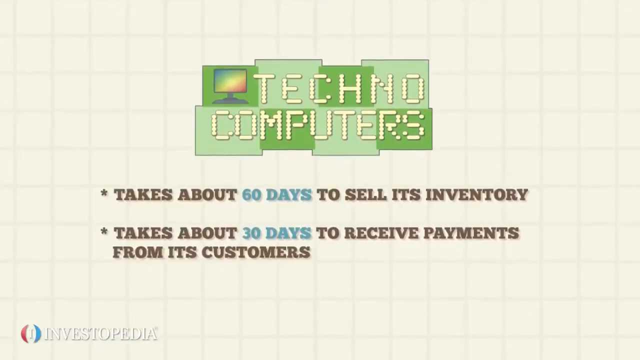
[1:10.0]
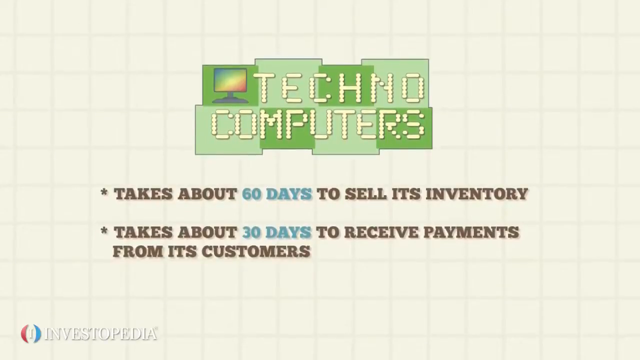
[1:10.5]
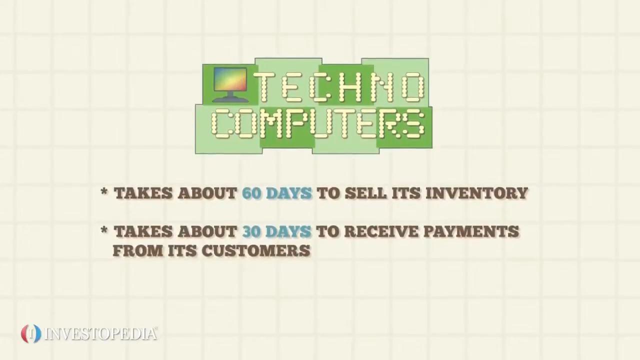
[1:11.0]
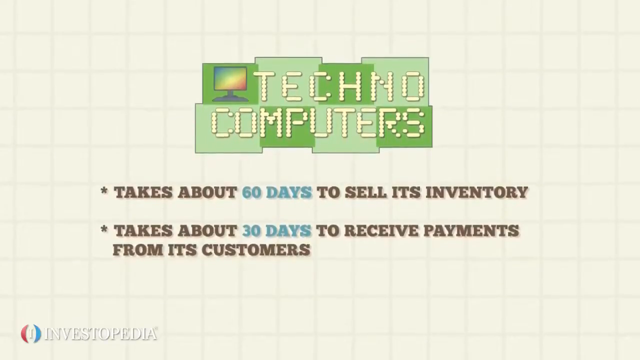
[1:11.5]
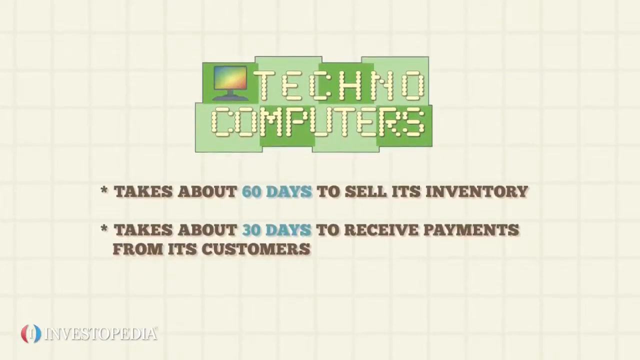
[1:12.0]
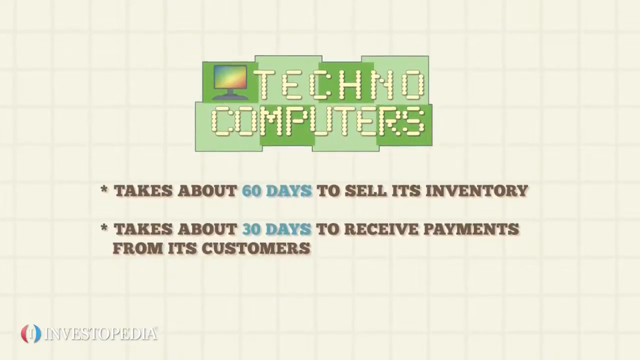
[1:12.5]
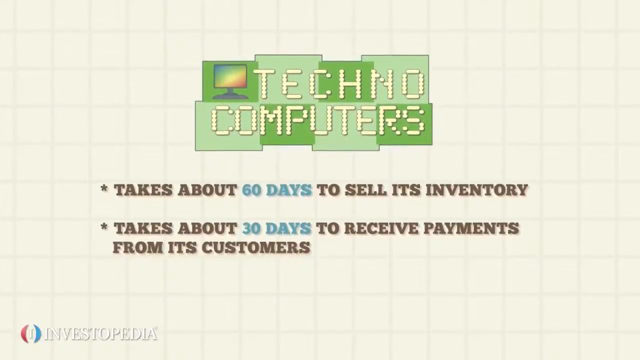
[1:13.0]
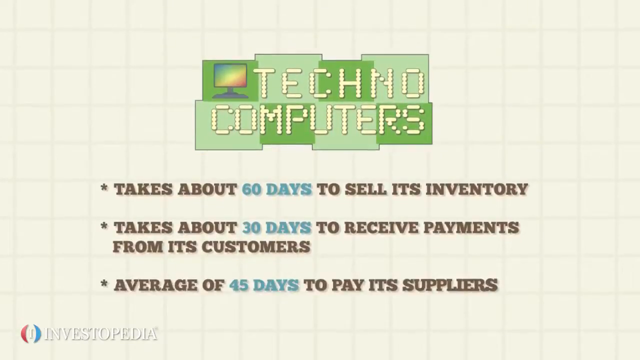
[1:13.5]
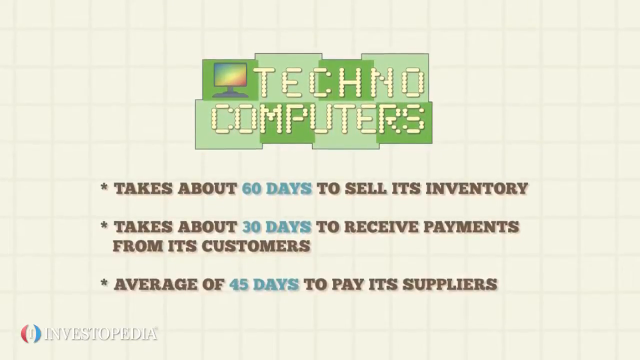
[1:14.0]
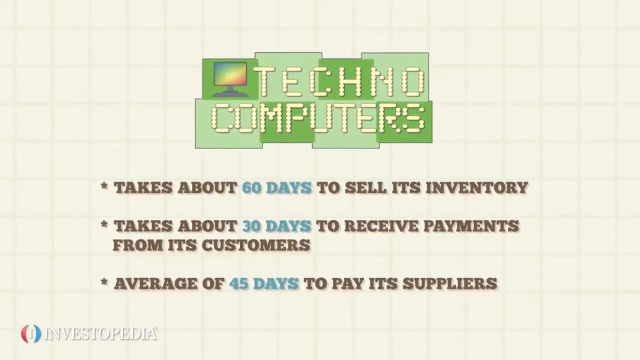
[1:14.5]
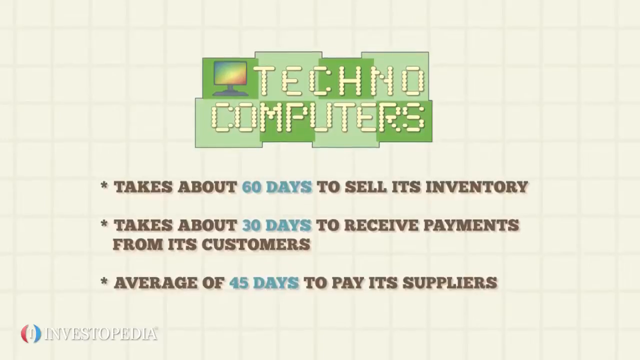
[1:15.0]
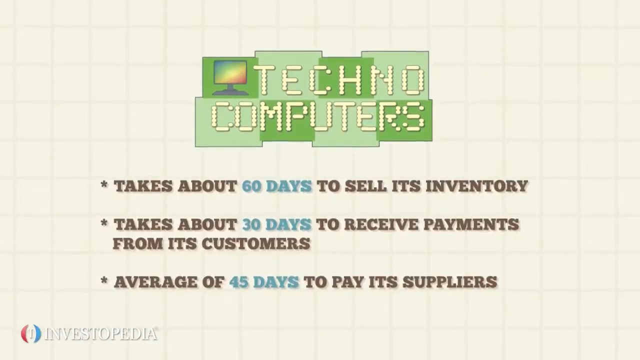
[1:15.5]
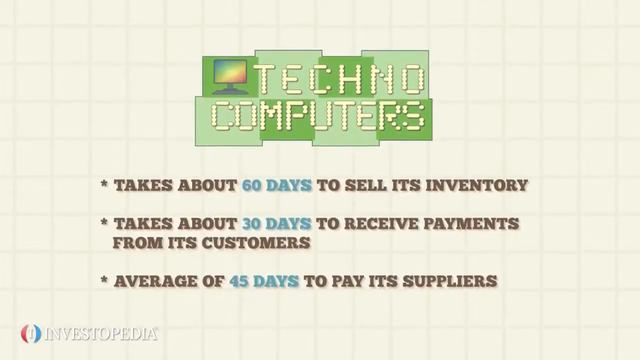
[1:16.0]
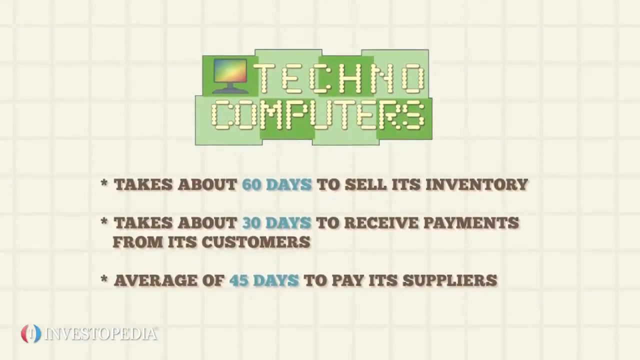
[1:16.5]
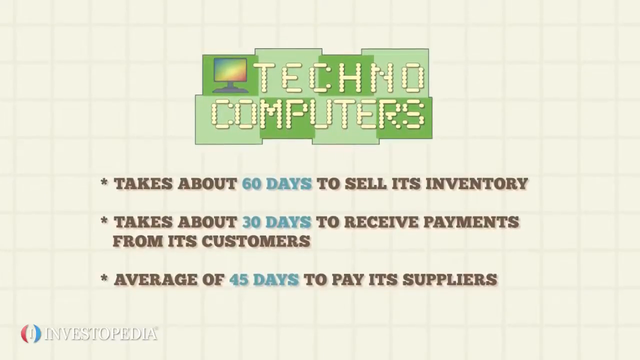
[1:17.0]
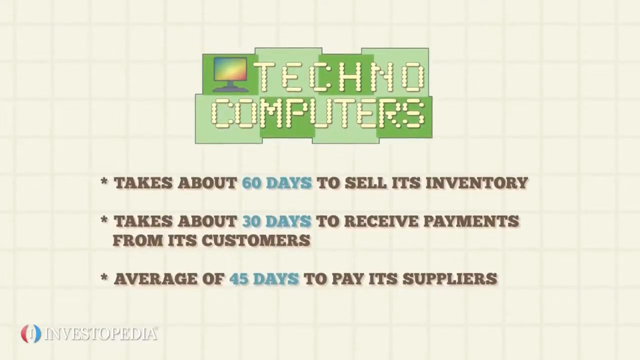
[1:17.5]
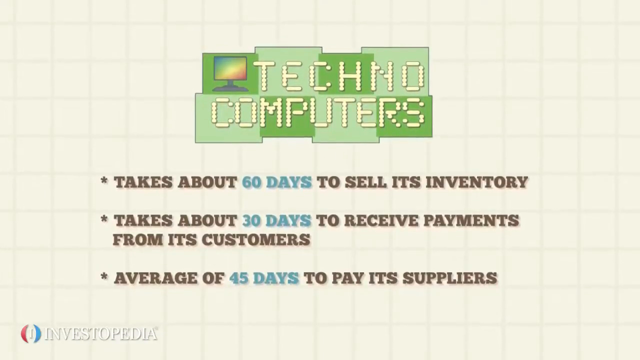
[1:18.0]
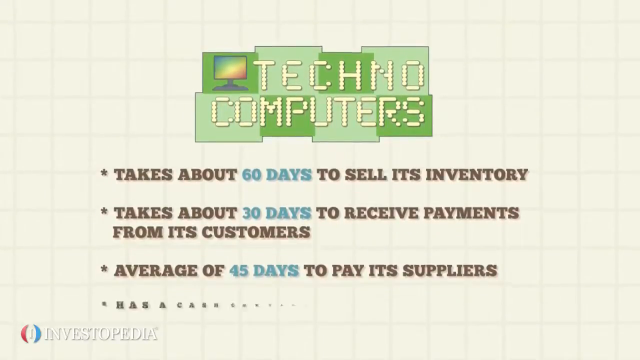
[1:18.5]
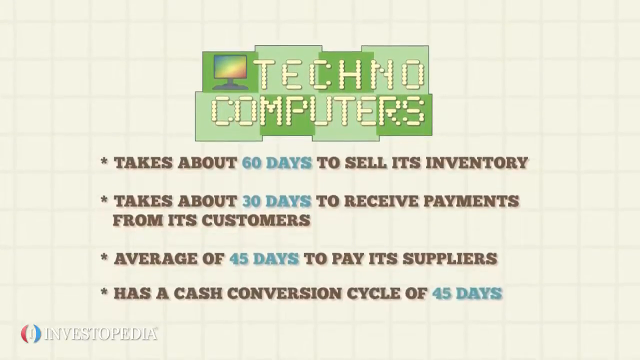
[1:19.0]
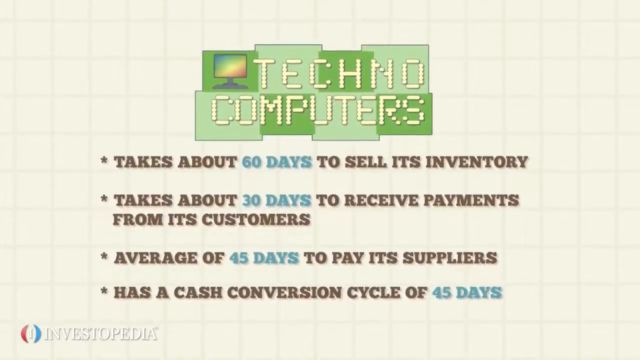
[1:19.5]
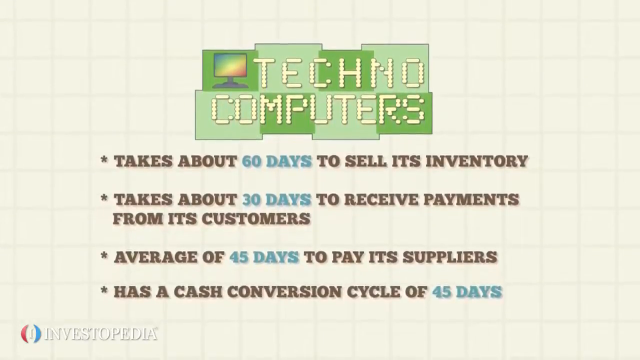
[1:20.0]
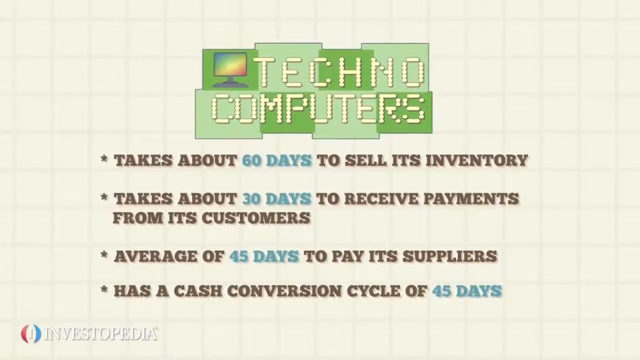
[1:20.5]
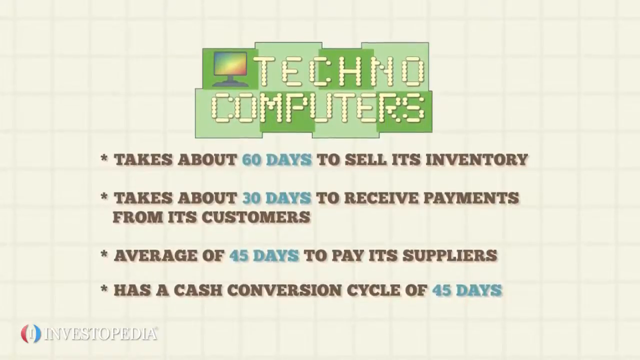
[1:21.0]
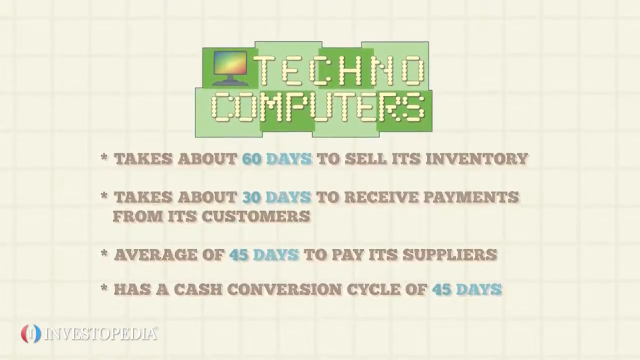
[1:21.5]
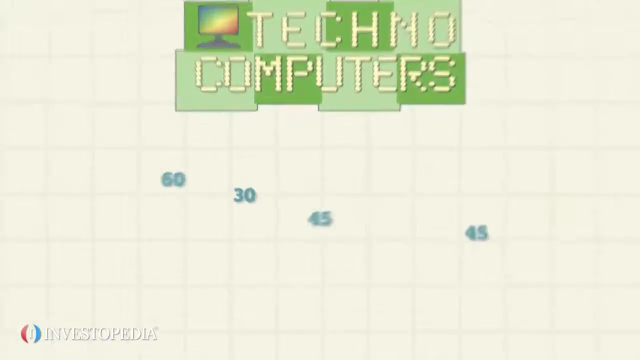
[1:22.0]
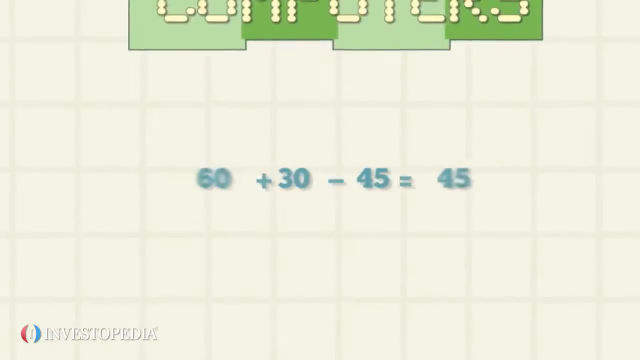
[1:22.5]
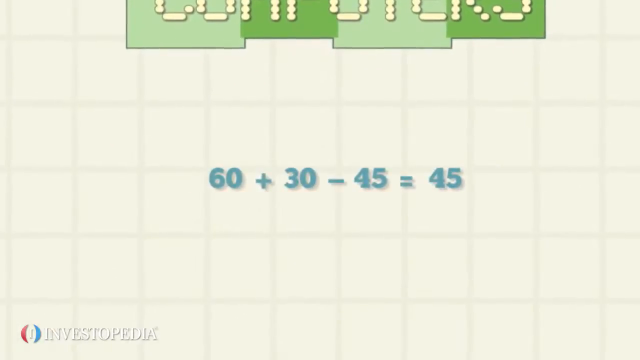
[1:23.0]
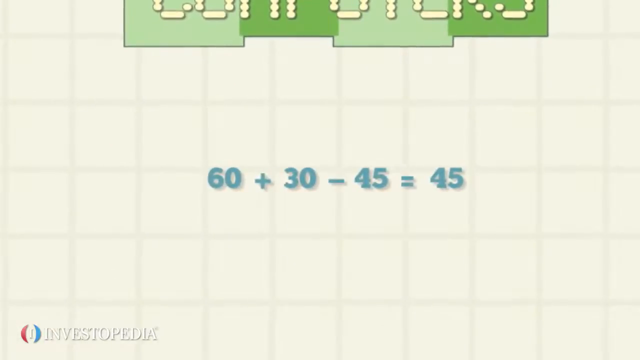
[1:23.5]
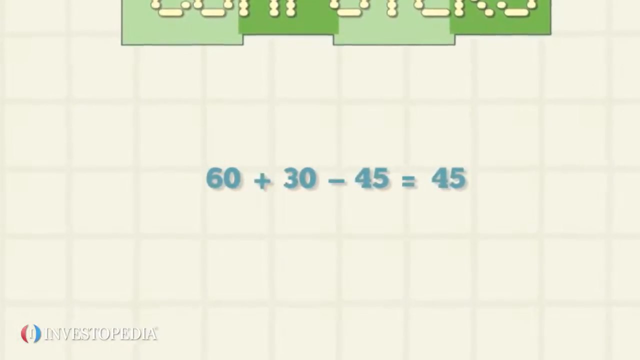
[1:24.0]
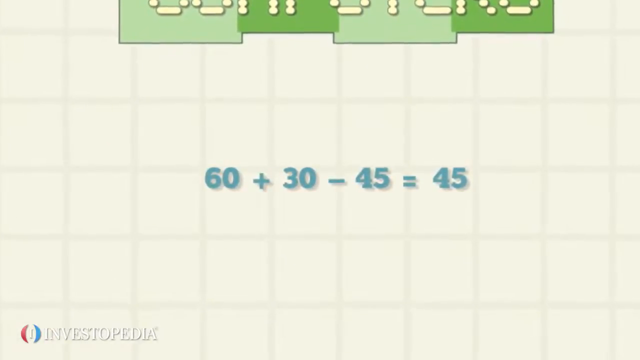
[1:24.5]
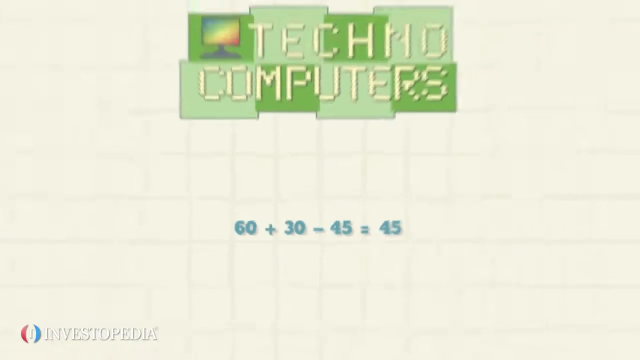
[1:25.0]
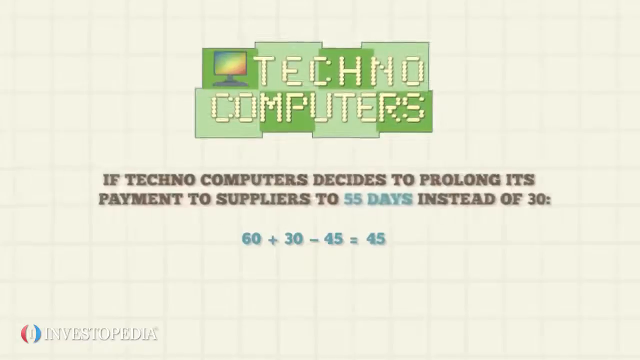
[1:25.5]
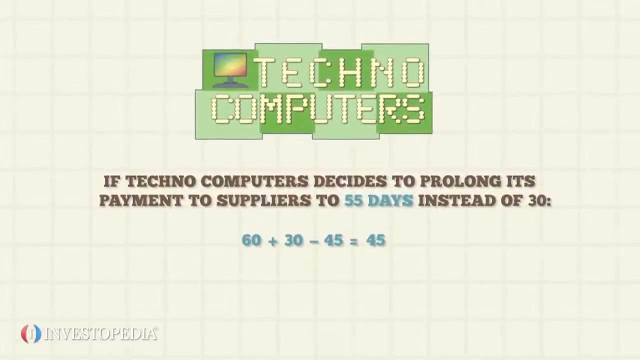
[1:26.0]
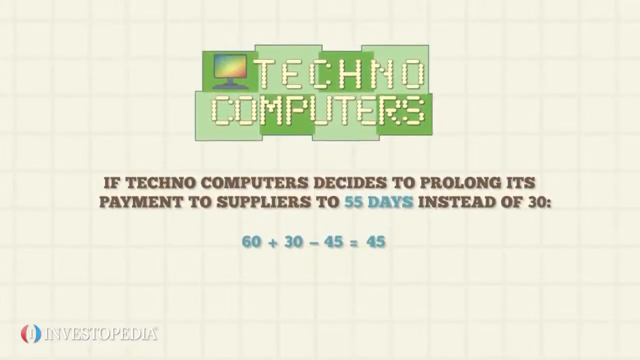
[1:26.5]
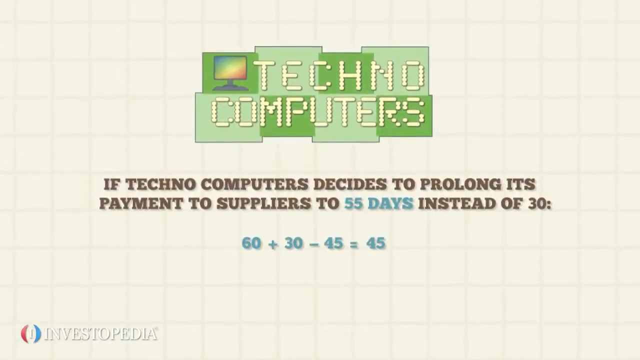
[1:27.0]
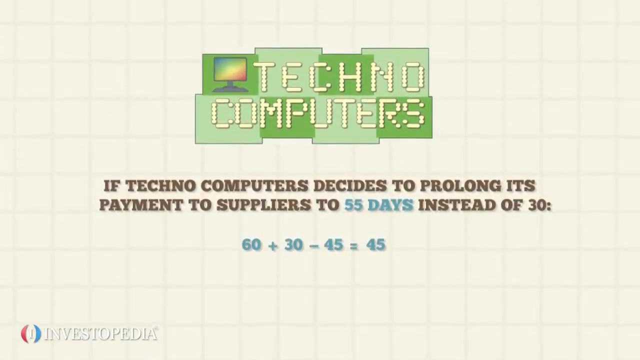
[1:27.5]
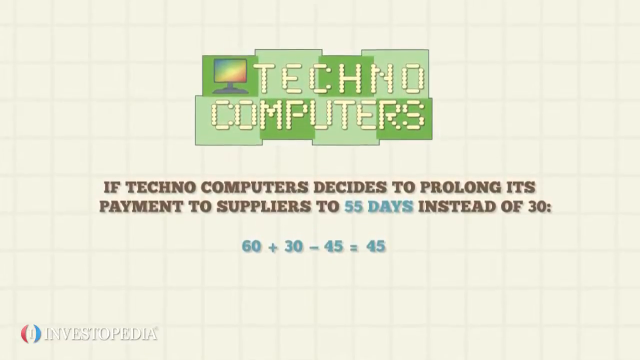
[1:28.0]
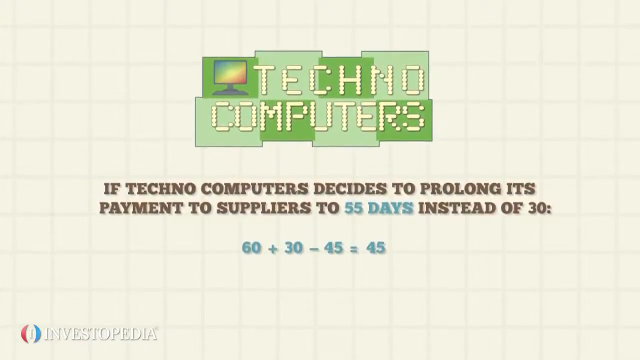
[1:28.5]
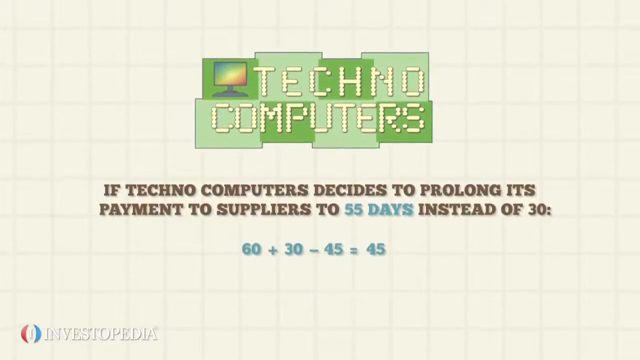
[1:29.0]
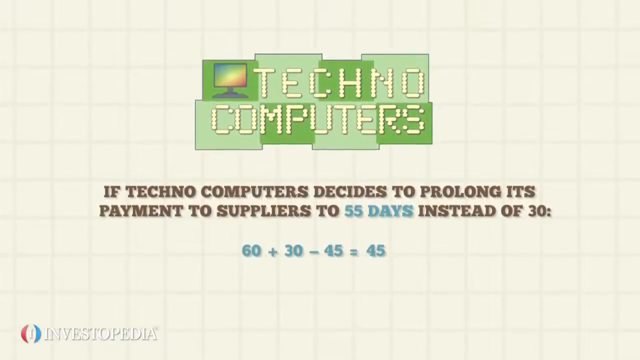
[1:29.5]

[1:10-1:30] Under the two pieces of information, another piece of information appears, also in brown and blue fonts, with the number of days in blue: 45 days. Another bullet or star pops up from below, again in brown and blue, with the number of days in blue: 45 days. The information then flips in an edited transition and numbers appear in a calculation written in blue, including minus 45. Under the techno computers logo, the fonts are blue and brown, with the number of days in blue: 55 days.